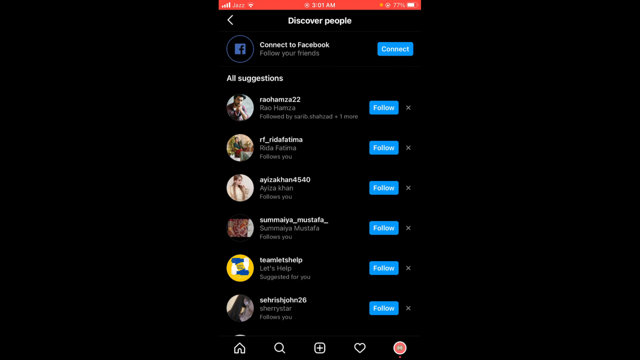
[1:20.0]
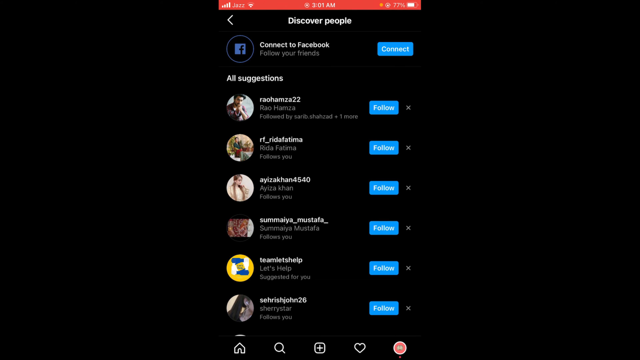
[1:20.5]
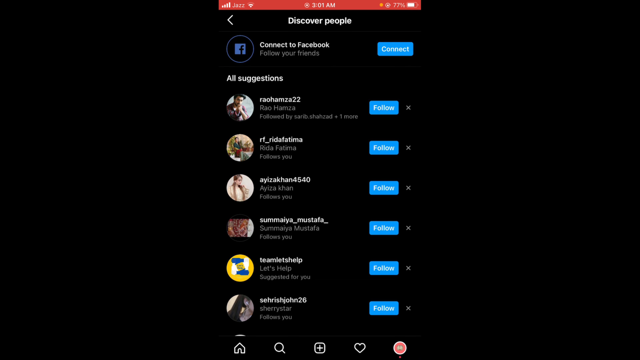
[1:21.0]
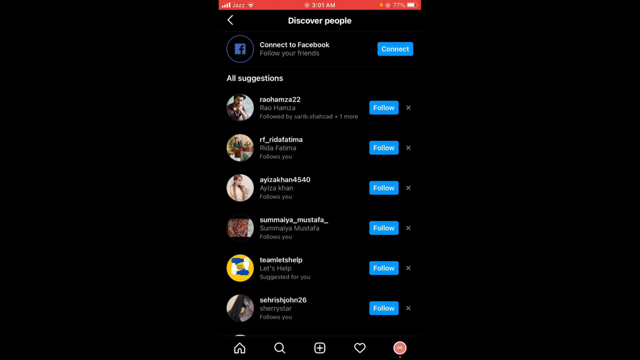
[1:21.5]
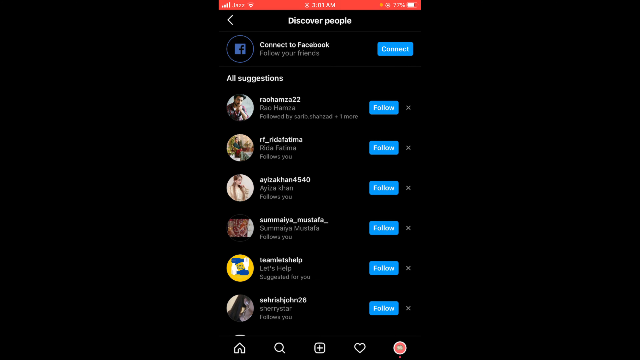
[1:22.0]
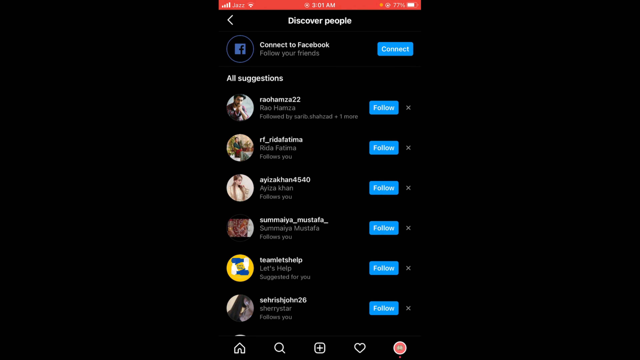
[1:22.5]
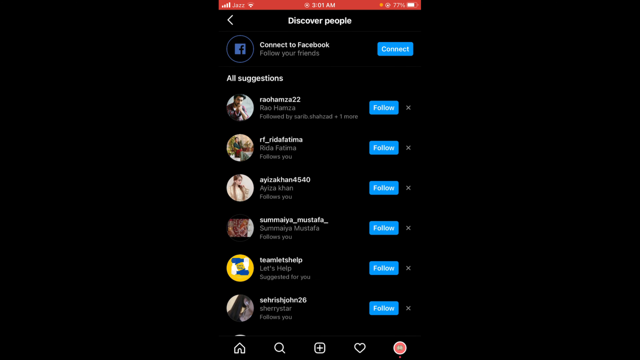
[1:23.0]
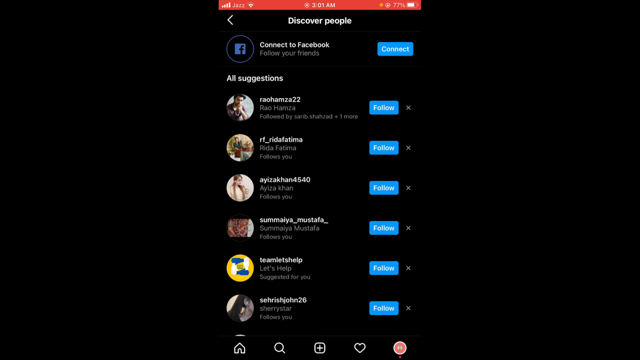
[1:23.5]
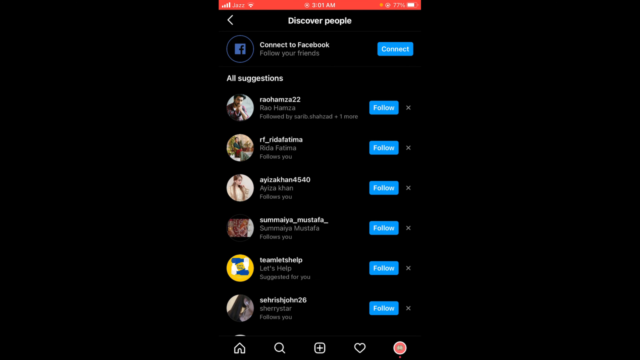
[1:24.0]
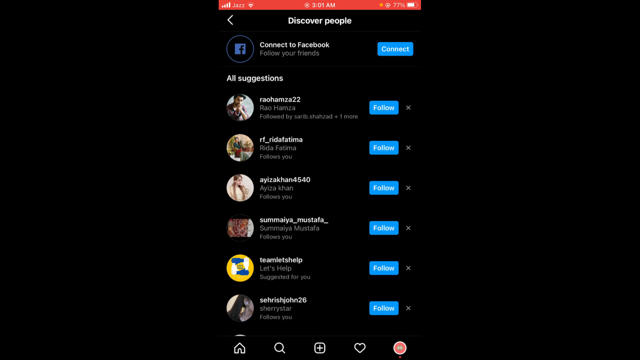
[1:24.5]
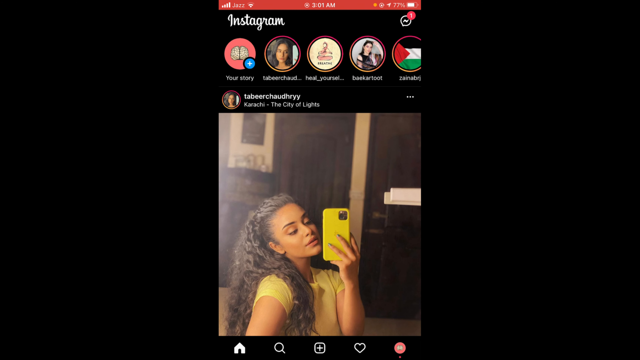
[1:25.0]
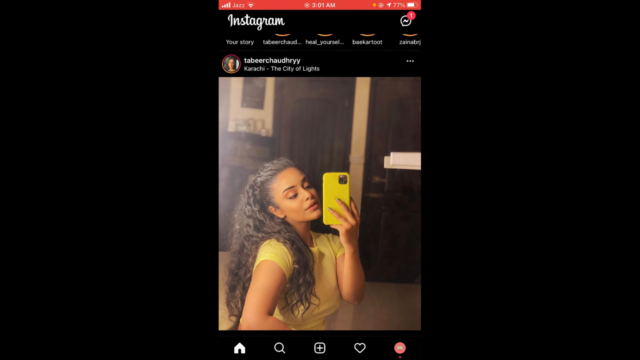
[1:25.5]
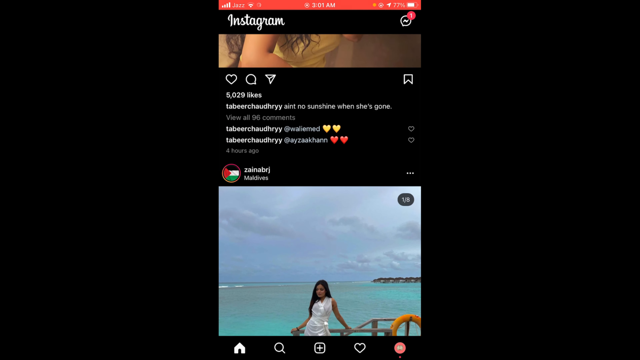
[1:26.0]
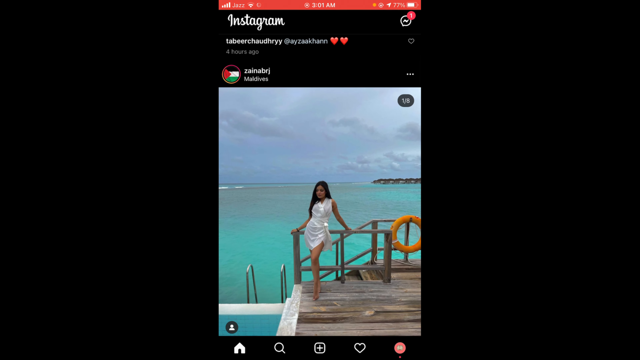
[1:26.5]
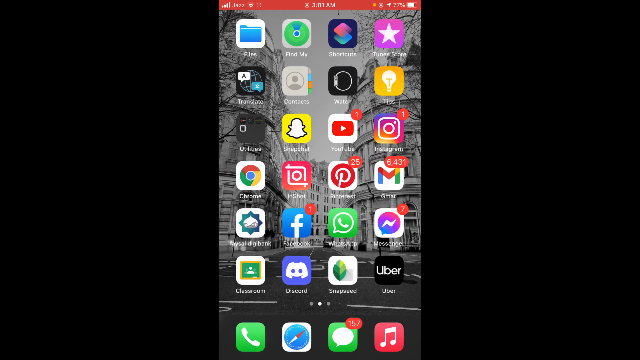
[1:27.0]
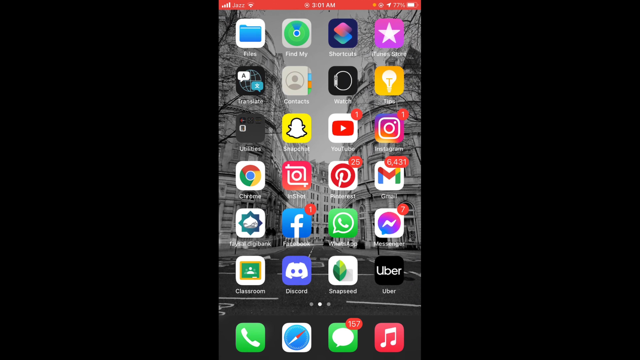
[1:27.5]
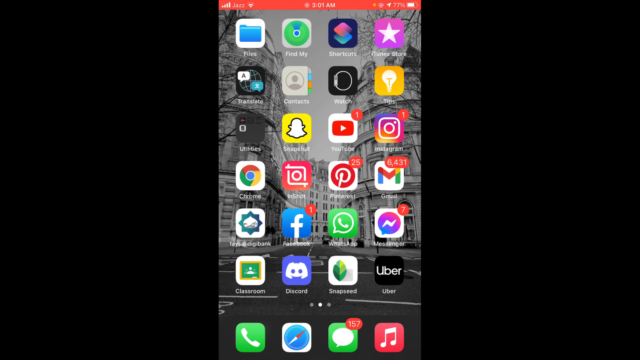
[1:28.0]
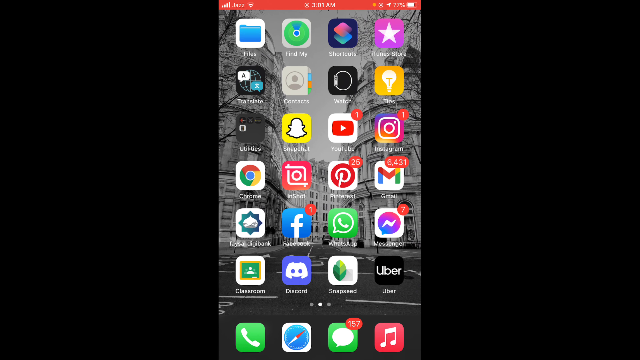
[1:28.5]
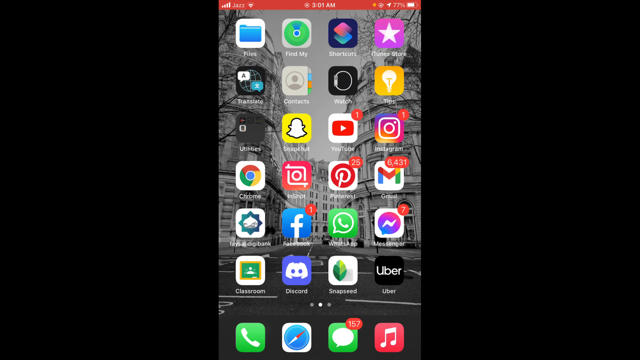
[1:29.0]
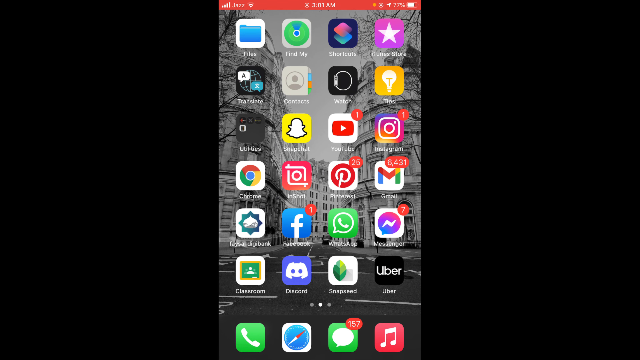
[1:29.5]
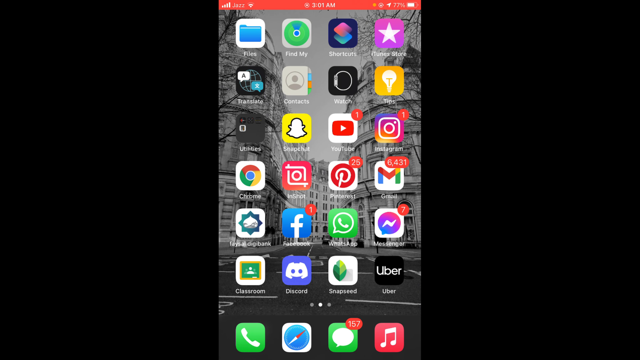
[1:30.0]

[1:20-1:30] The phone screen, which looks like it is being recorded, shows Instagram. In the Discover People section there is "Connect to Facebook" with a blue Connect button, followed by suggestions of other contacts. The screen goes back to the young lady with the yellow phone and long curly hair, wearing a yellow shirt. Scrolling down reveals another lady, possibly Hispanic as well, wearing a short white dress. Instagram is then closed, returning to a screen with a lot of icons.